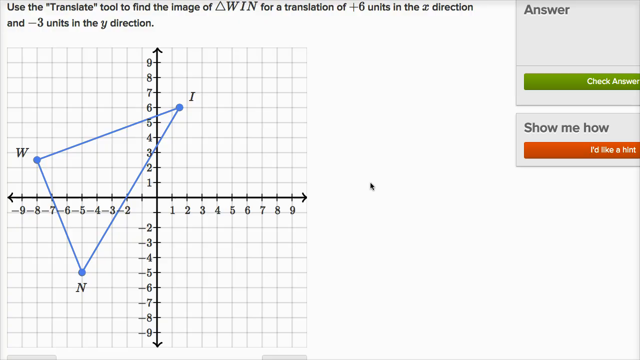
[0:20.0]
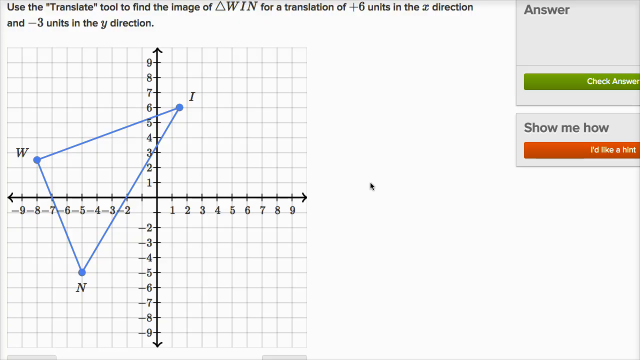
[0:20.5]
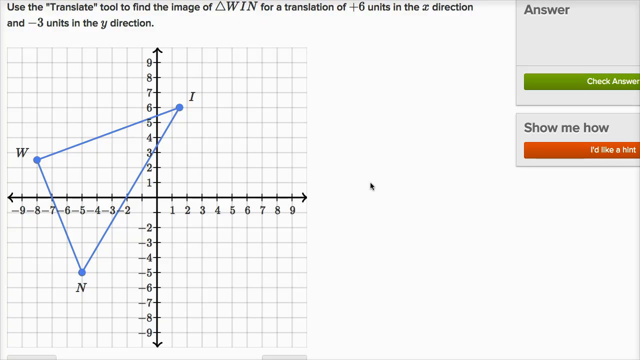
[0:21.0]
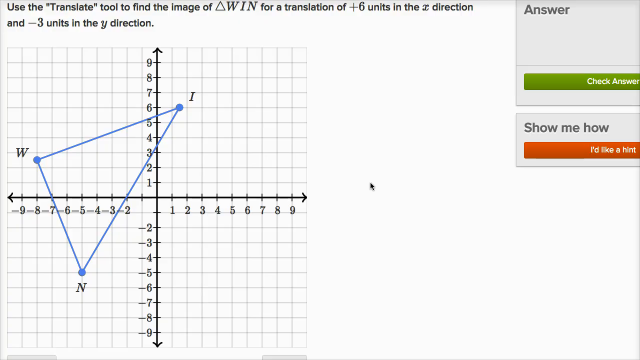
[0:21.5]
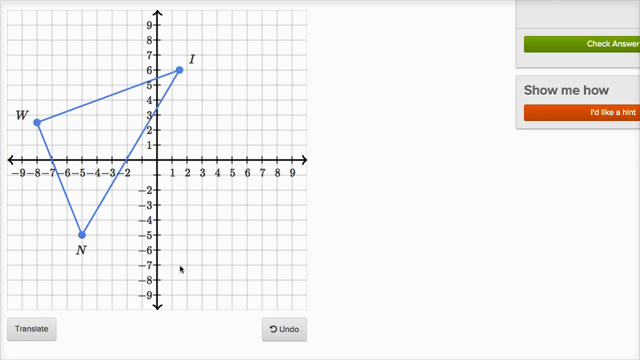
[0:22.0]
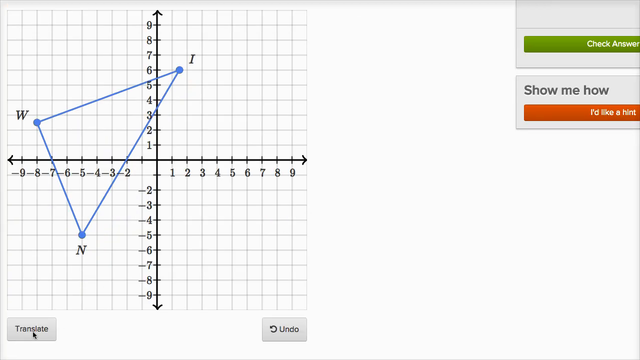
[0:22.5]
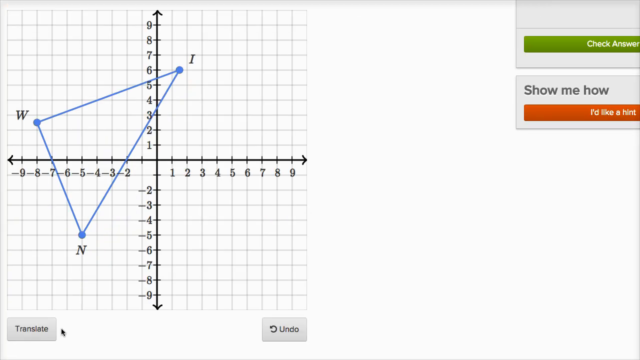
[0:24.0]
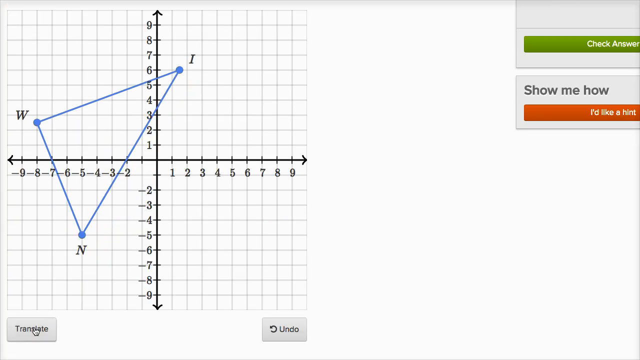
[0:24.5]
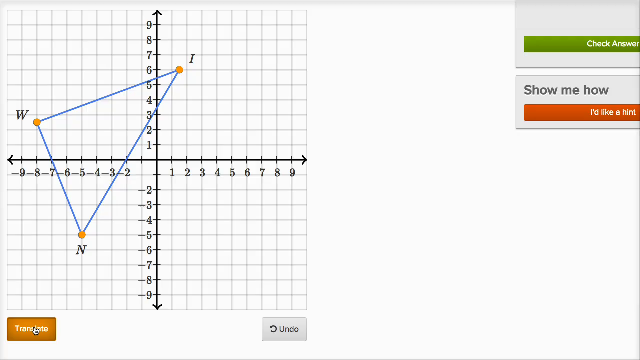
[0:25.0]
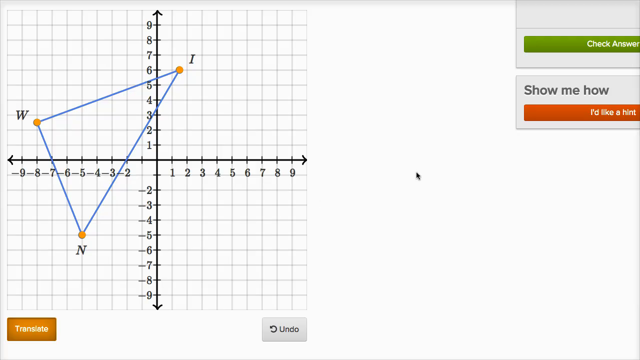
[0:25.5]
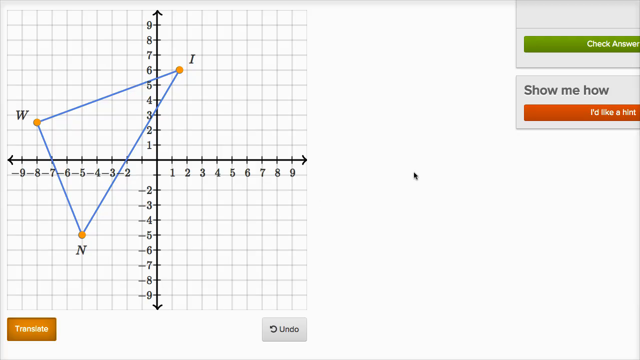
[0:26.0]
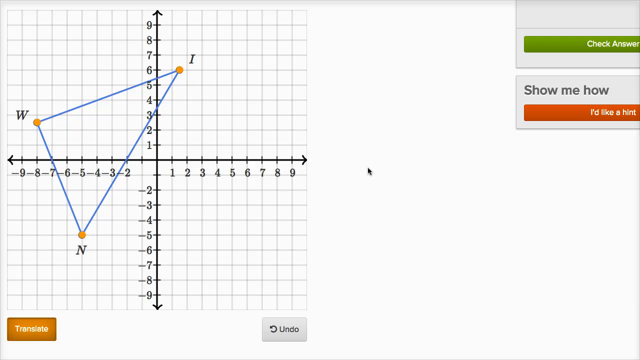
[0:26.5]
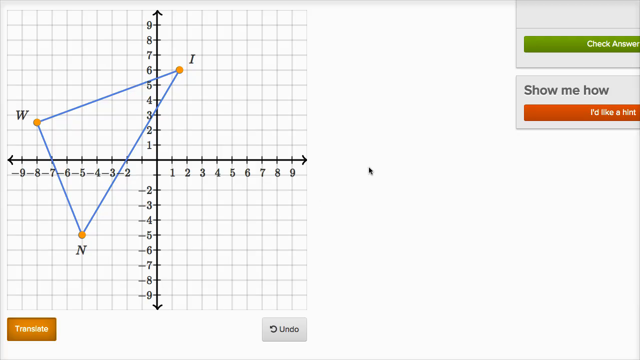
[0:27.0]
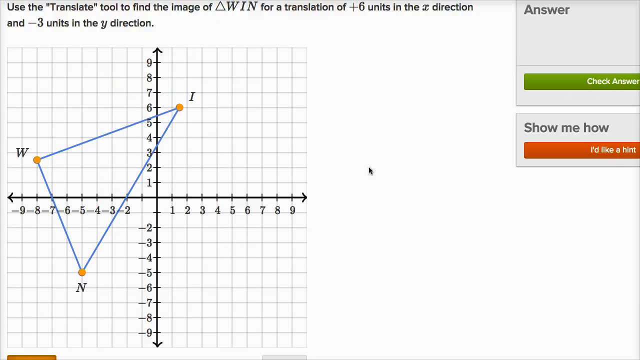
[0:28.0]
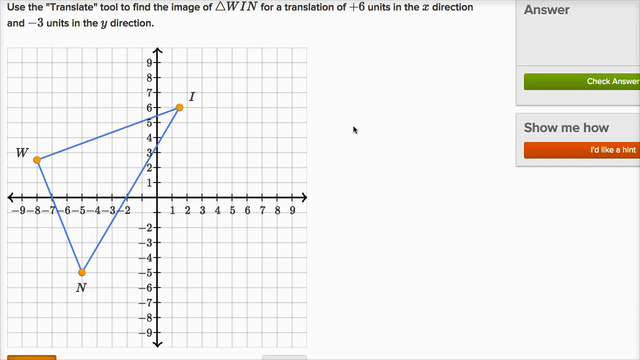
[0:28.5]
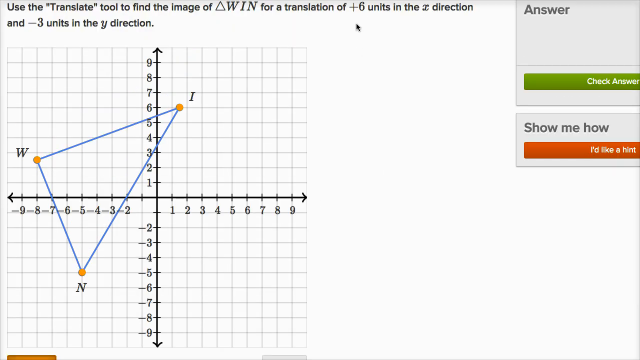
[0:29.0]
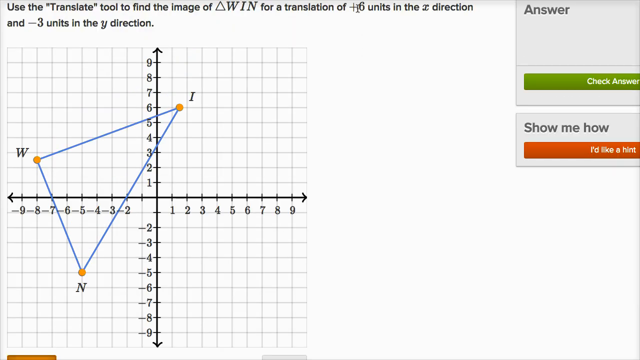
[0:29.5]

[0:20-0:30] The page scrolls down, showing more of the bottom of the graph. At the very bottom are a translate button in the bottom left and an undo button in the bottom right. The translate button is clicked and glows orange, and then the W, N, and I points all light up in the same orange color. The view then begins to scroll back up.